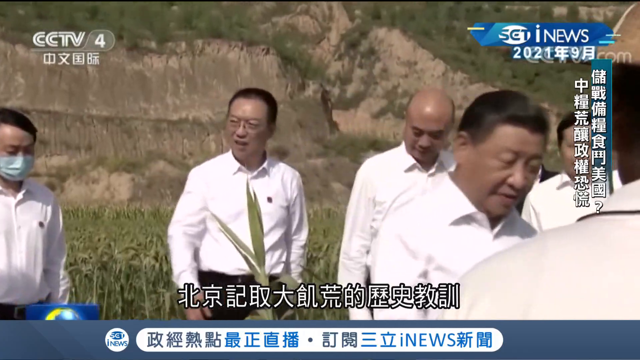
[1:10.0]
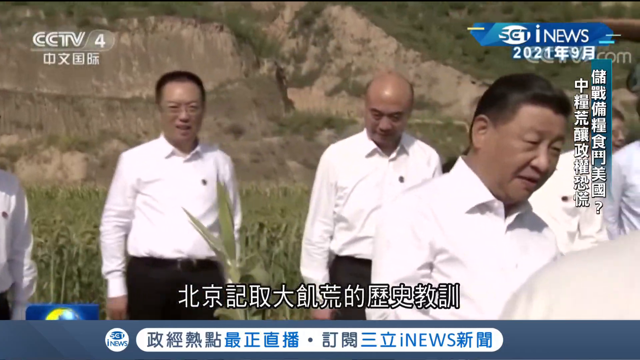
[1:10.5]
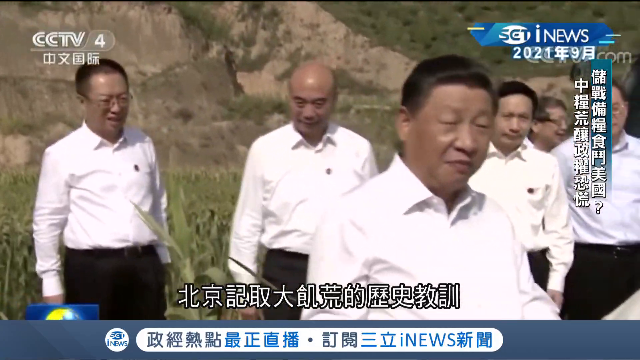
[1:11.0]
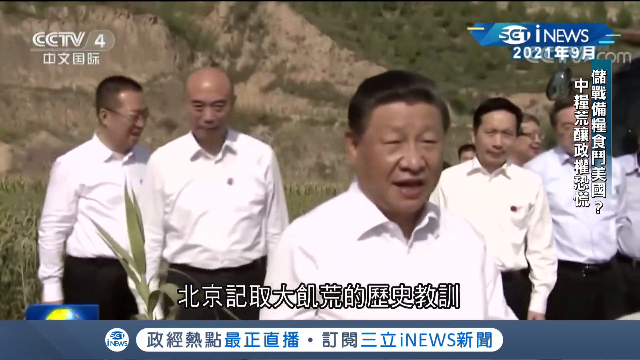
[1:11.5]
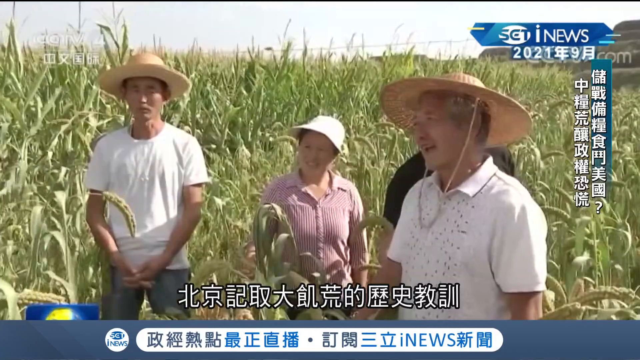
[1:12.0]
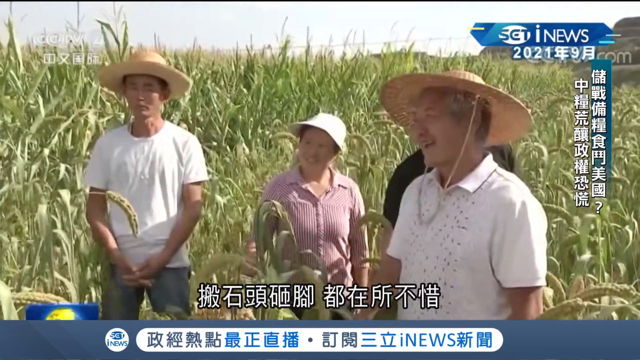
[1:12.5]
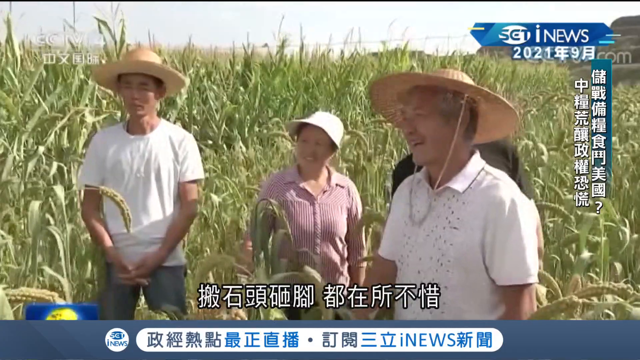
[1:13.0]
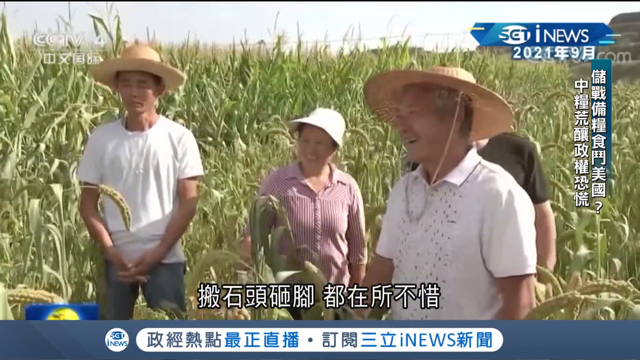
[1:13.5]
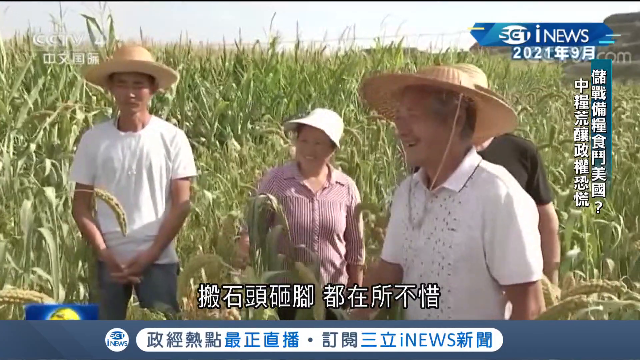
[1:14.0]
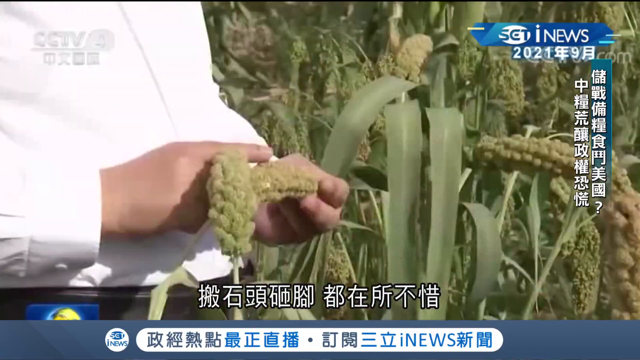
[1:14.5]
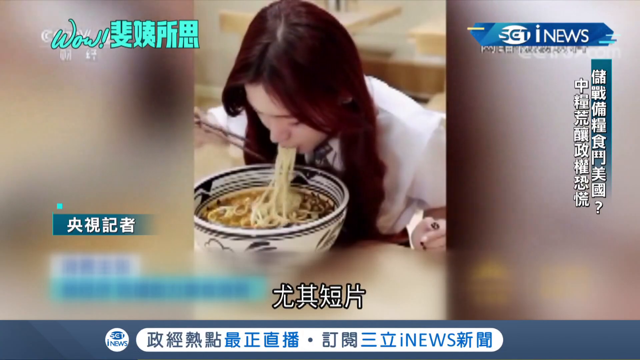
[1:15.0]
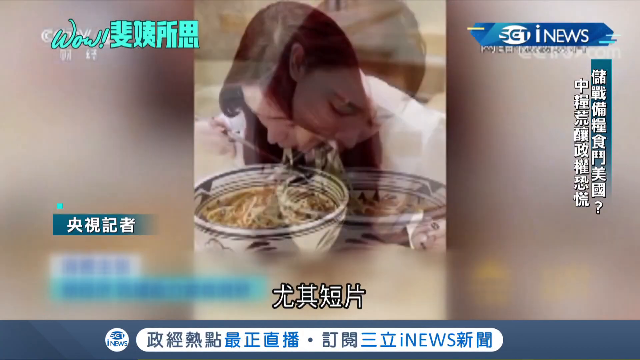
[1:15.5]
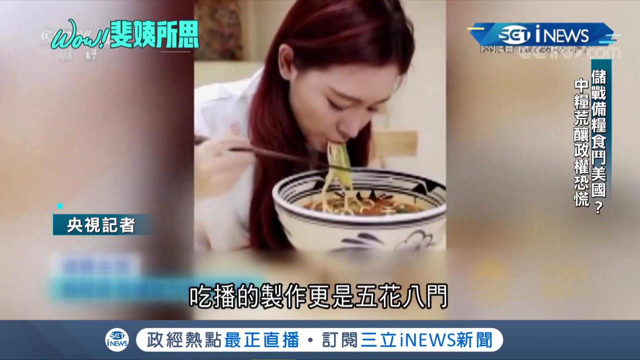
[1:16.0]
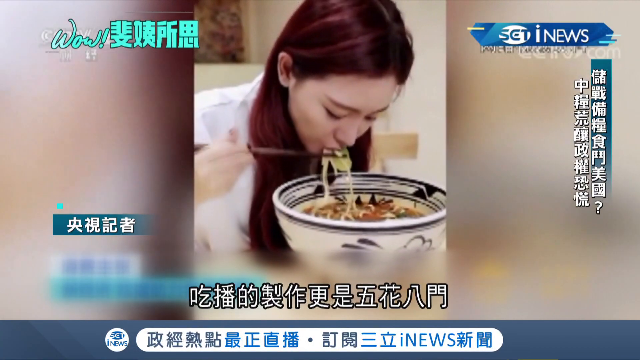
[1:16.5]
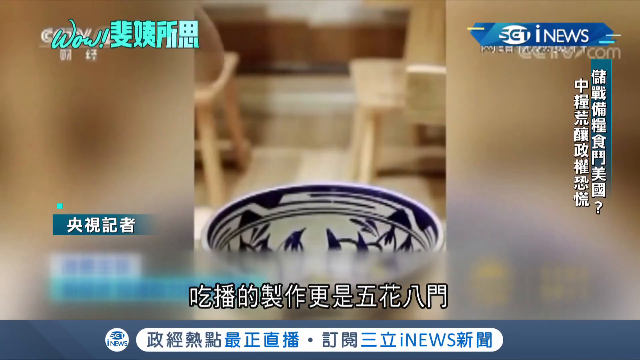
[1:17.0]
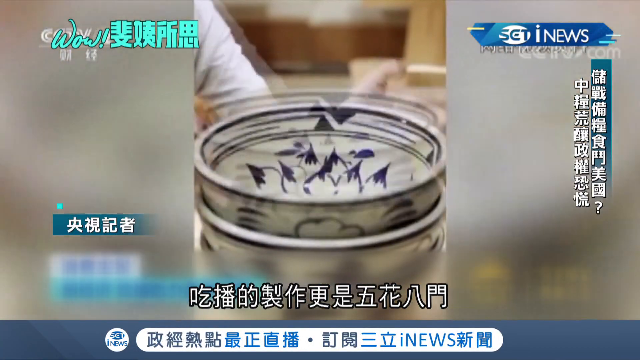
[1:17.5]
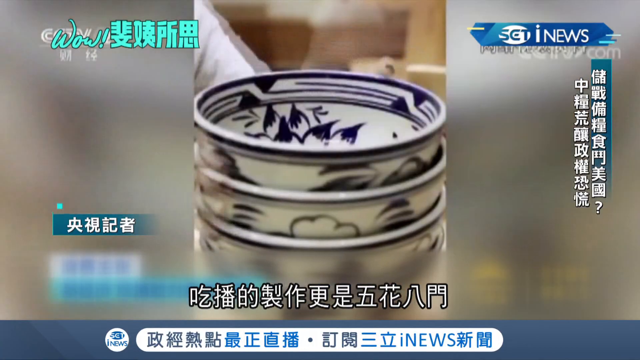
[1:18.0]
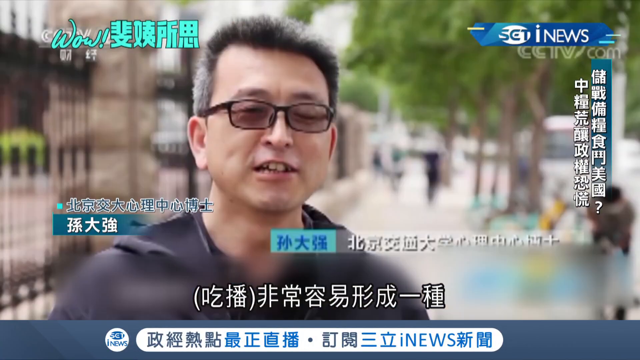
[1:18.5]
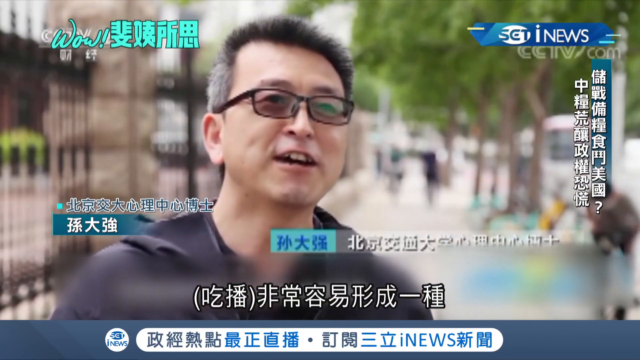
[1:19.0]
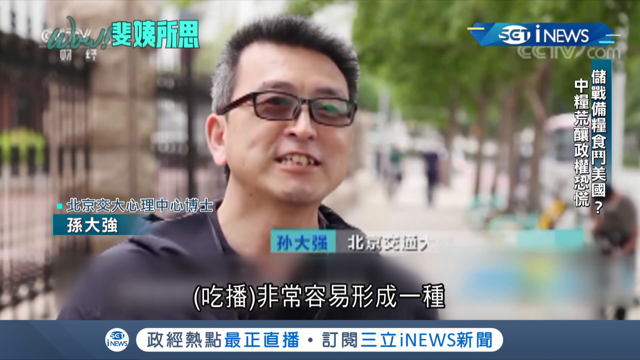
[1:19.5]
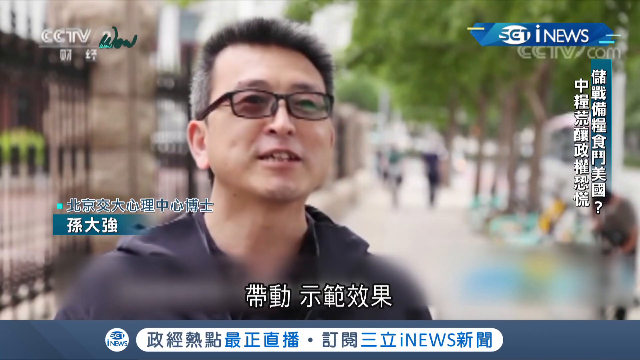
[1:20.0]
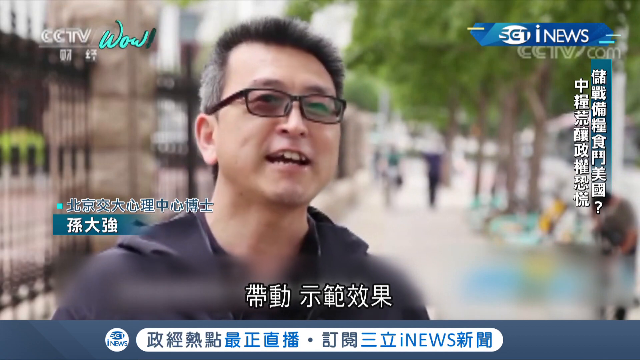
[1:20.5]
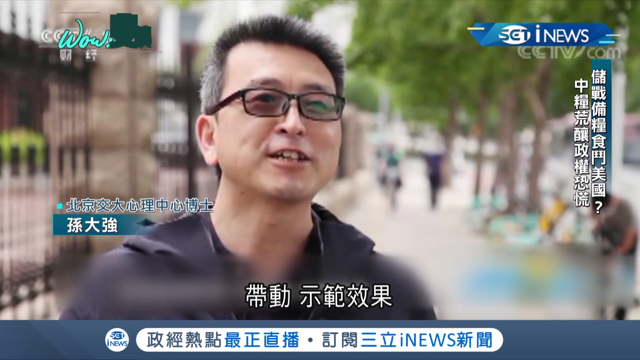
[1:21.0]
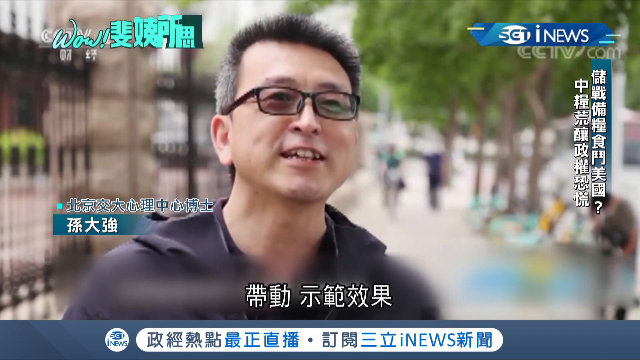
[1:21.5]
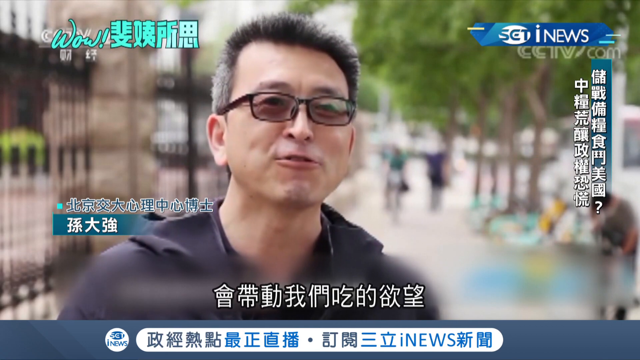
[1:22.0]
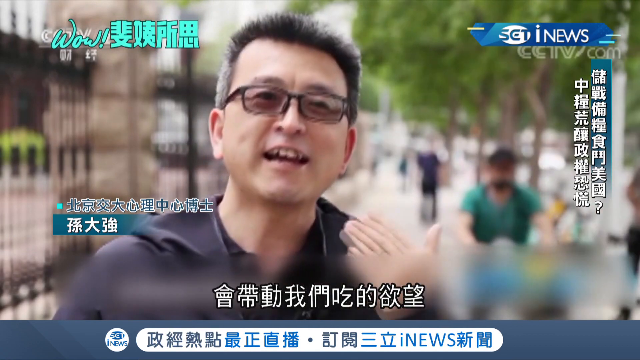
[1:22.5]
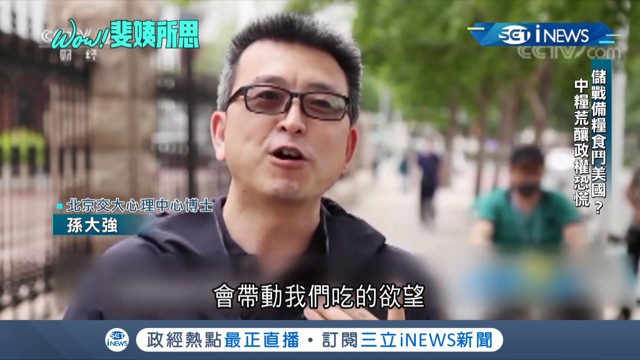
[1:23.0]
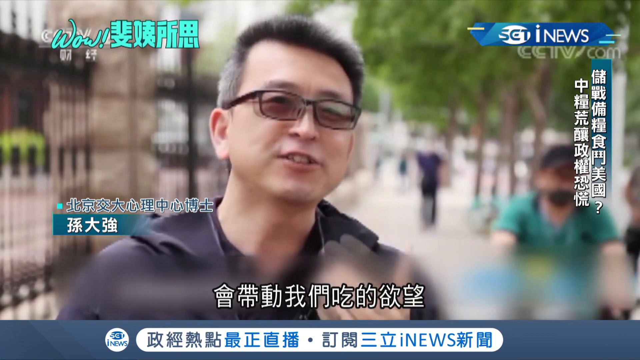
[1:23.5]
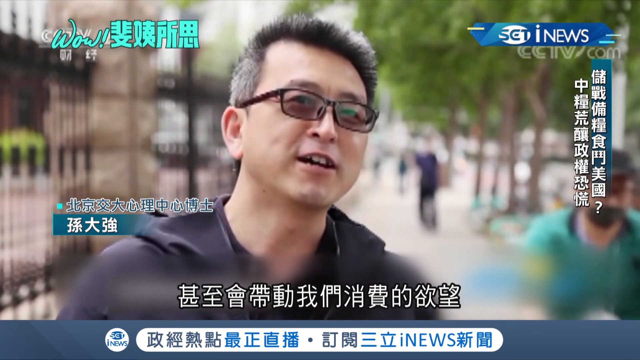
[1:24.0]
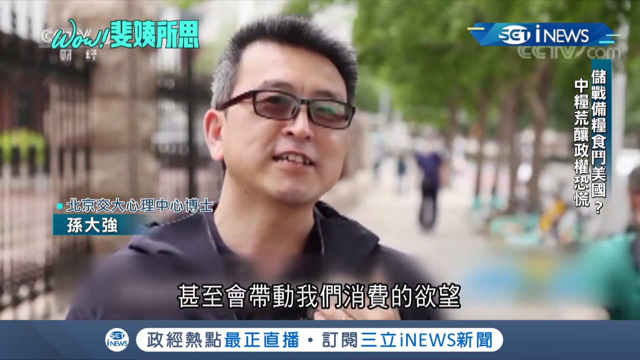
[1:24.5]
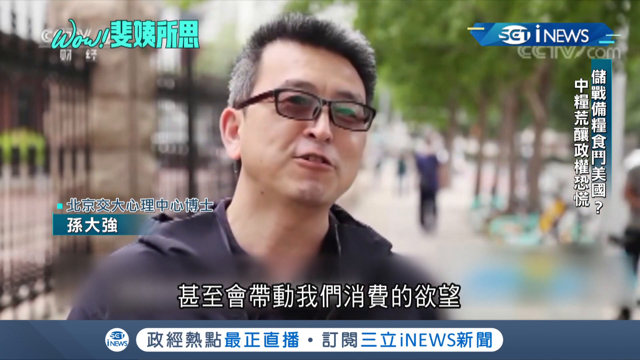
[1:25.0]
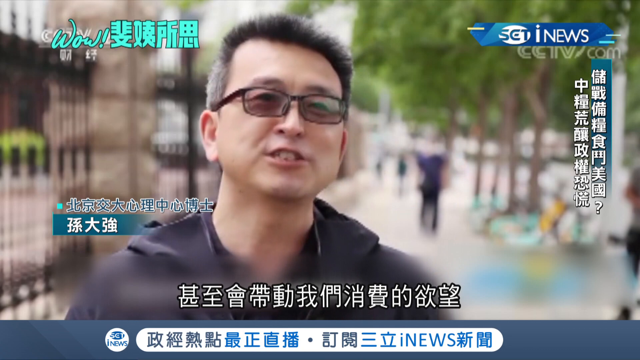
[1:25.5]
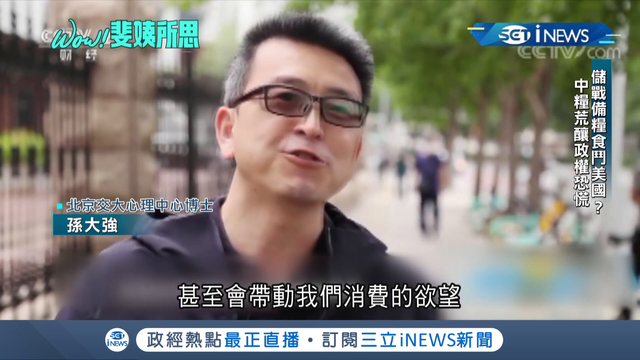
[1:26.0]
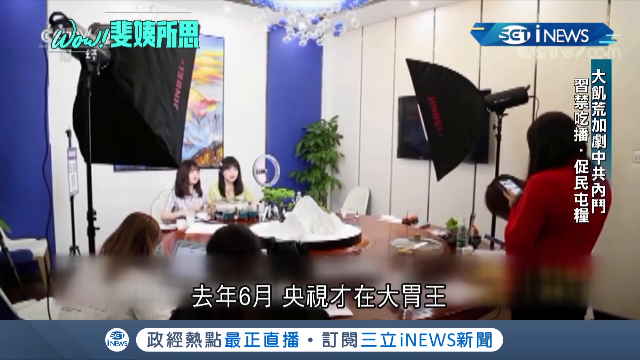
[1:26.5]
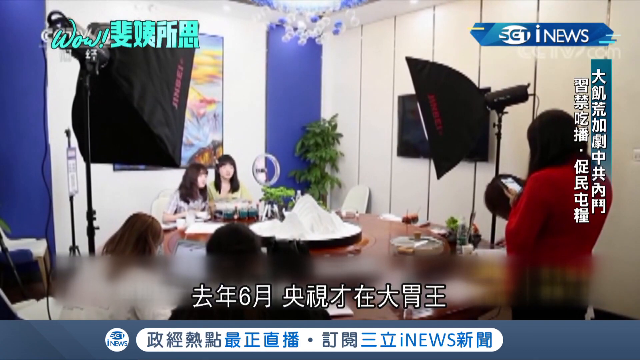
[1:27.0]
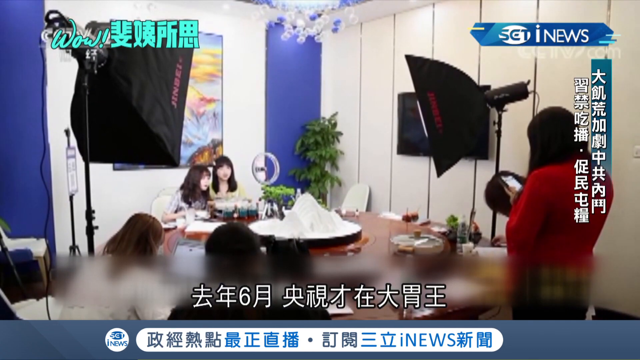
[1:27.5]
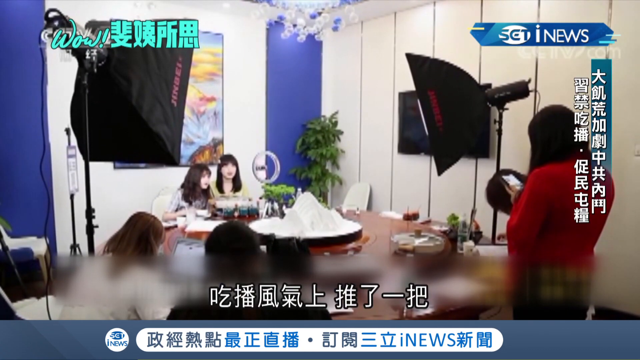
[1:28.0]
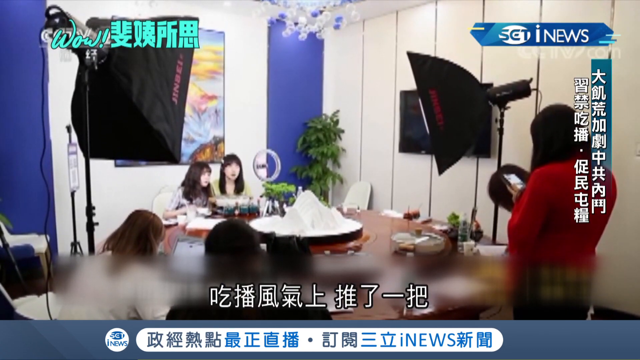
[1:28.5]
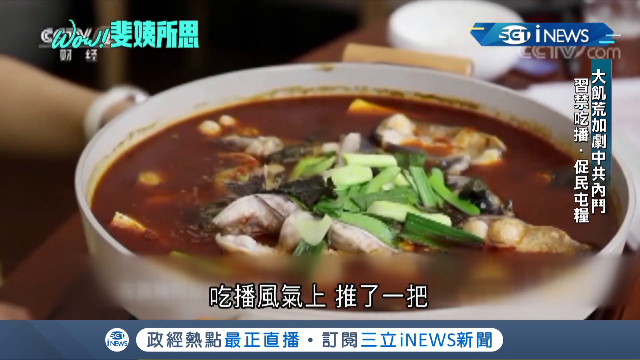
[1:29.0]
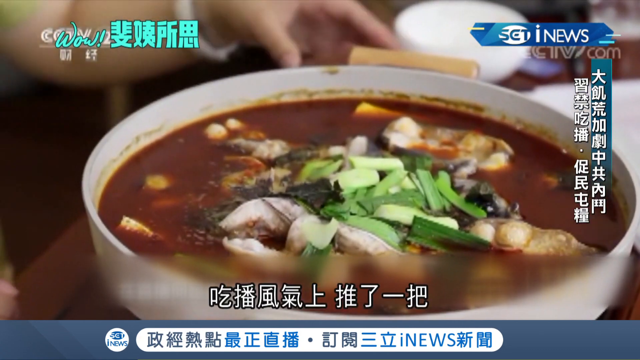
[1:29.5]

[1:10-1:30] A farmer holds some crops in his hands. A woman eats a bowl of soup very rapidly, holding chopsticks in her right hand. Bowls are stacked on top of each other. A Chinese man wearing glasses is interviewed outside by a news broadcast program. Two women sit eating soup with a lot of cameras in front of them and very bright lights shining on them; they appear to have a lot of food, bowls of soup, in front of them. Some Chinese farmers appear with cornfields behind them, all wearing farmer hats.